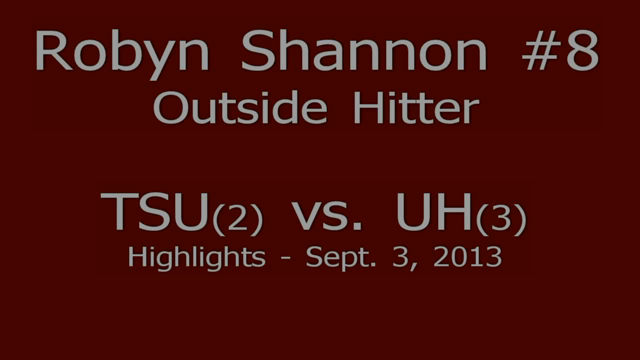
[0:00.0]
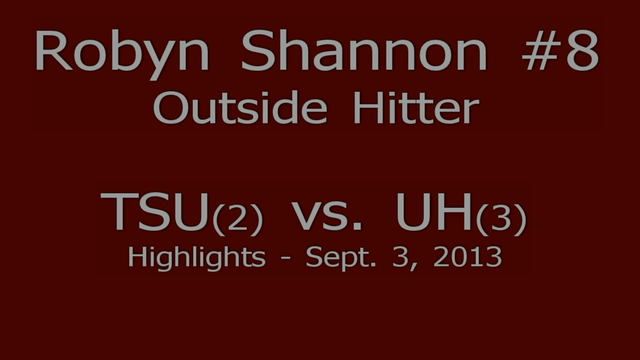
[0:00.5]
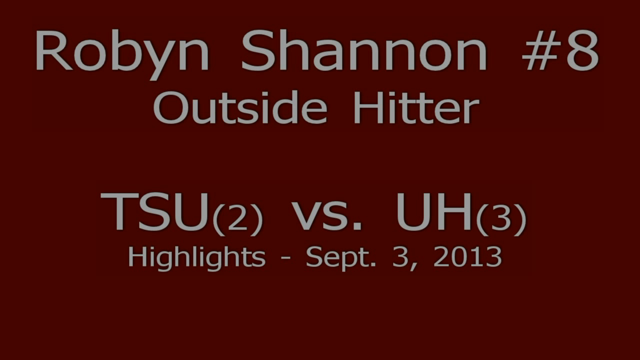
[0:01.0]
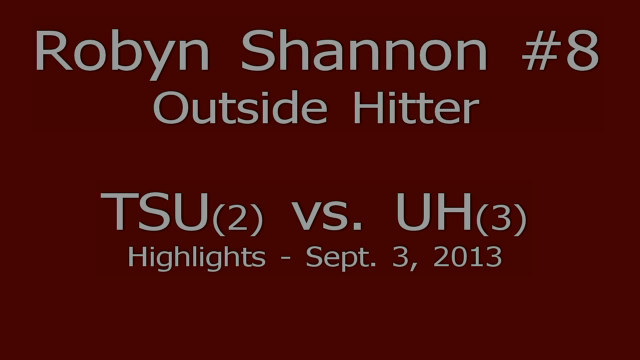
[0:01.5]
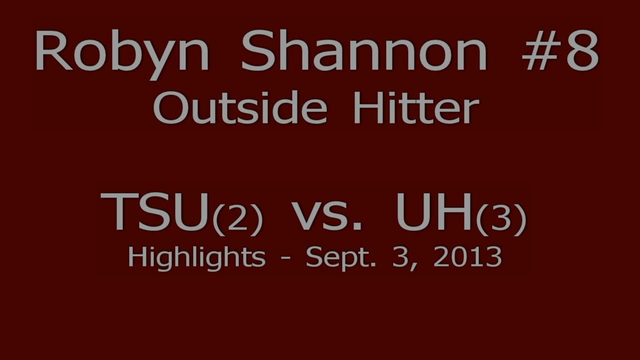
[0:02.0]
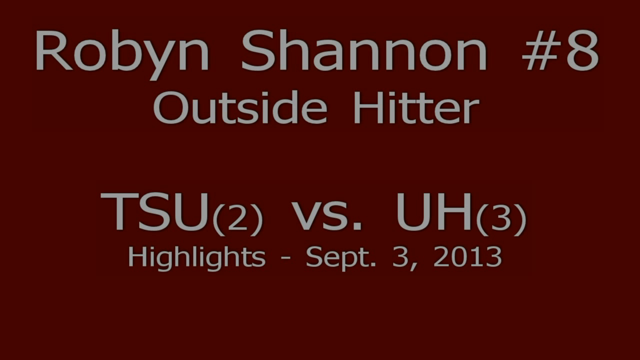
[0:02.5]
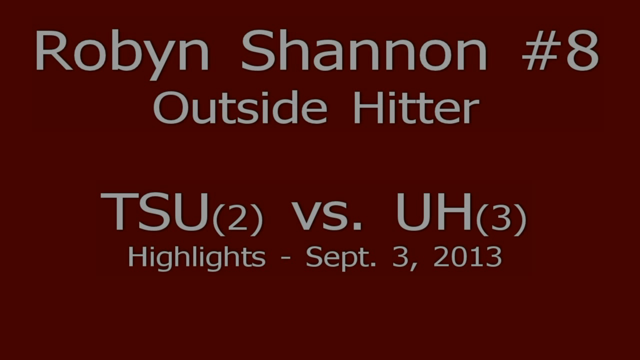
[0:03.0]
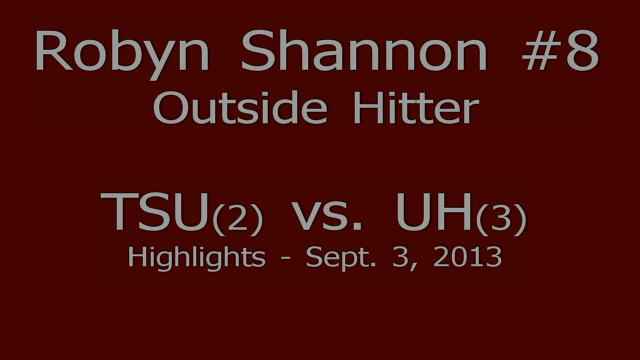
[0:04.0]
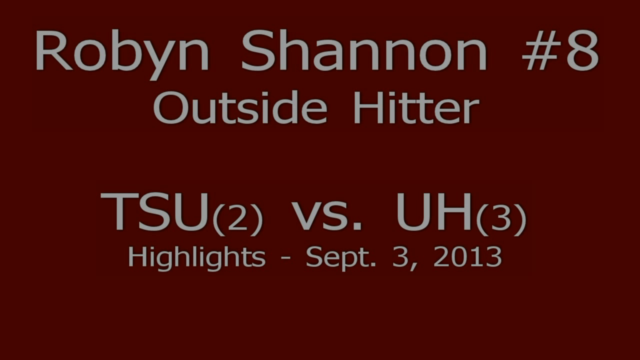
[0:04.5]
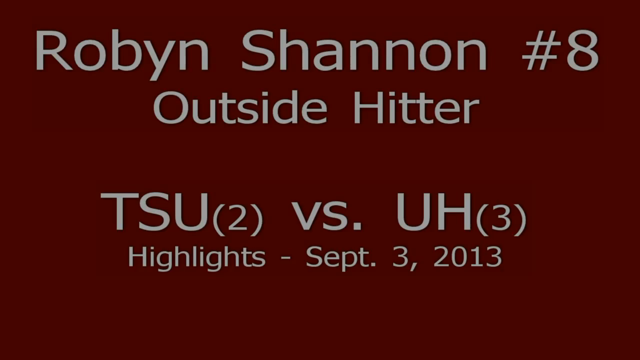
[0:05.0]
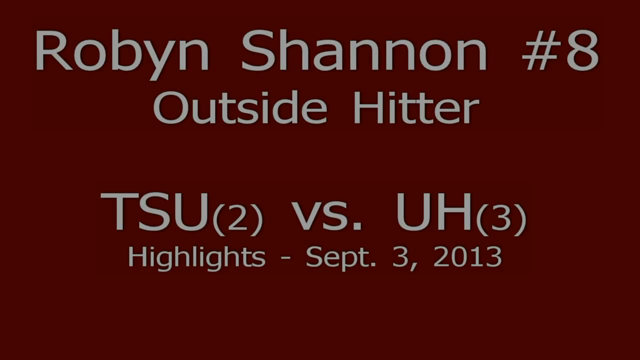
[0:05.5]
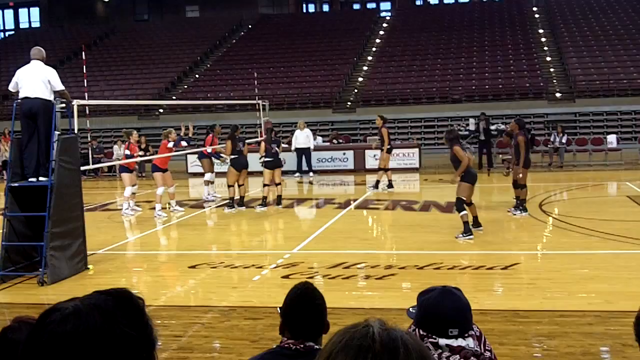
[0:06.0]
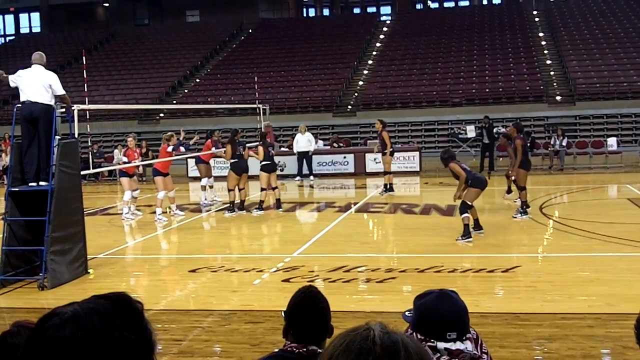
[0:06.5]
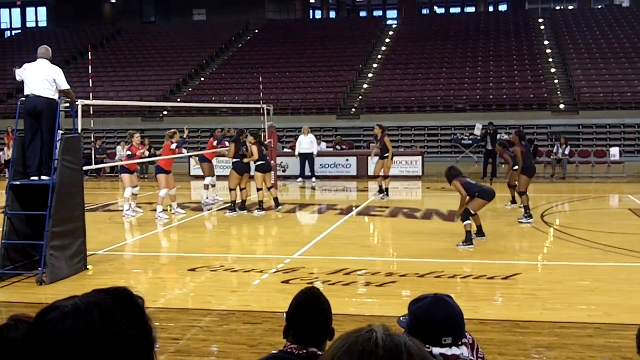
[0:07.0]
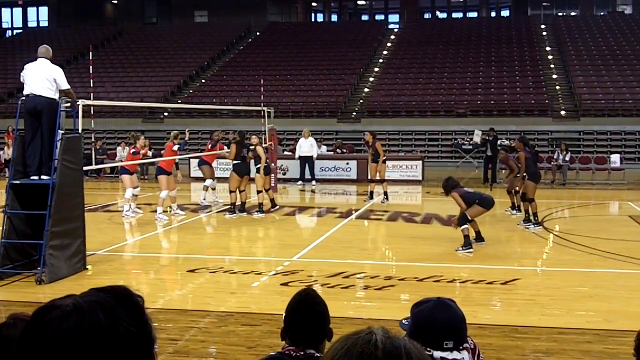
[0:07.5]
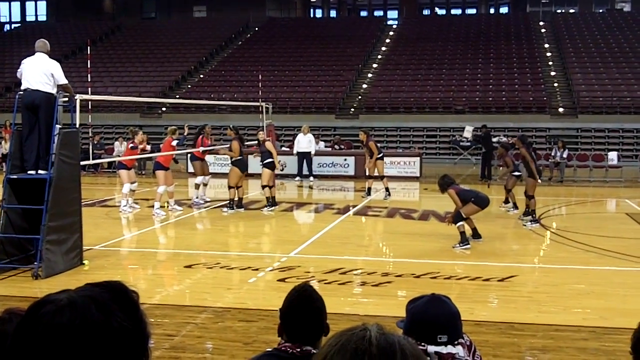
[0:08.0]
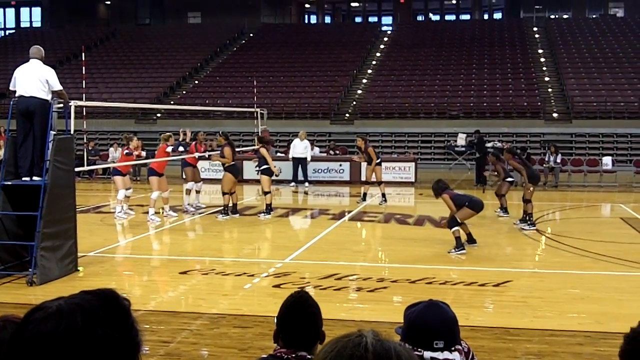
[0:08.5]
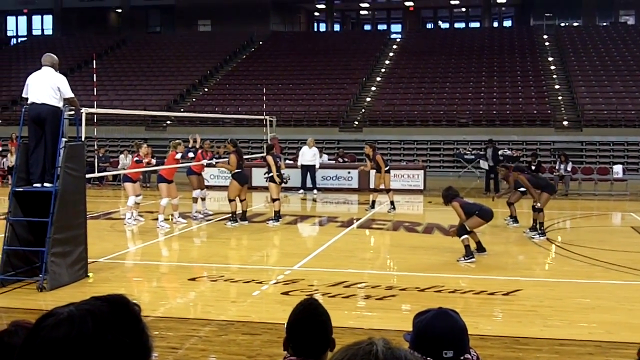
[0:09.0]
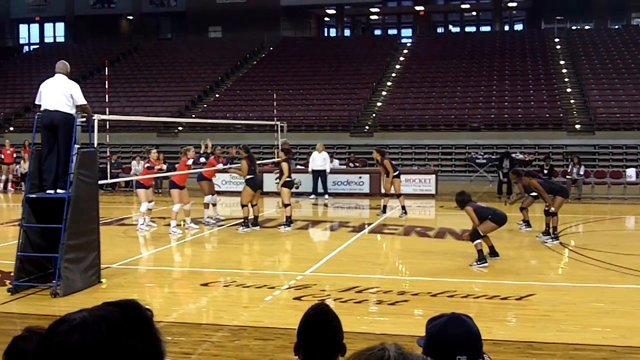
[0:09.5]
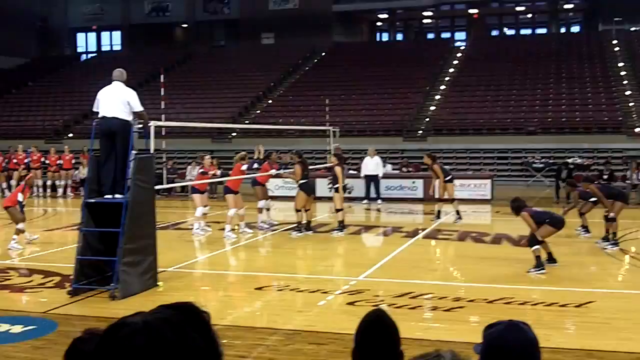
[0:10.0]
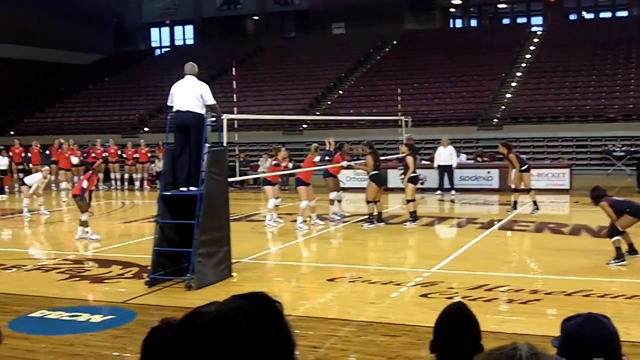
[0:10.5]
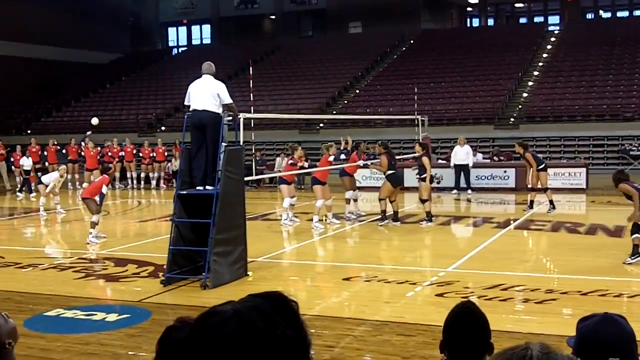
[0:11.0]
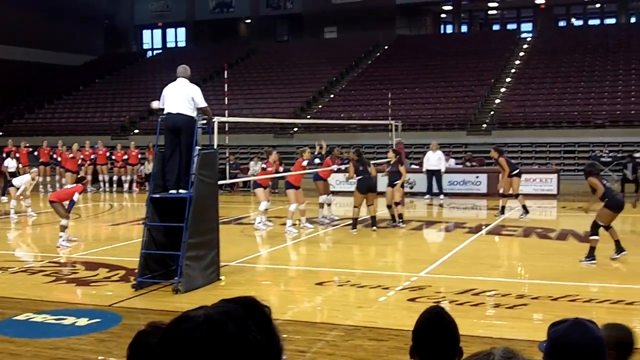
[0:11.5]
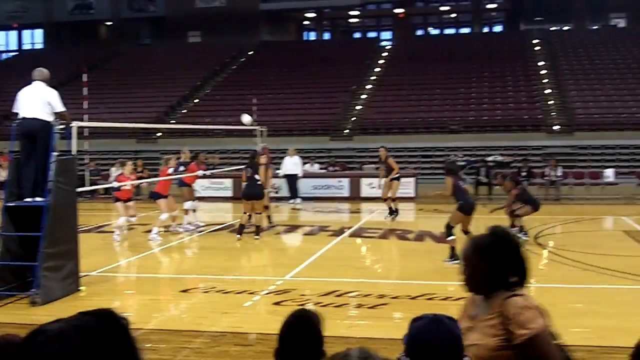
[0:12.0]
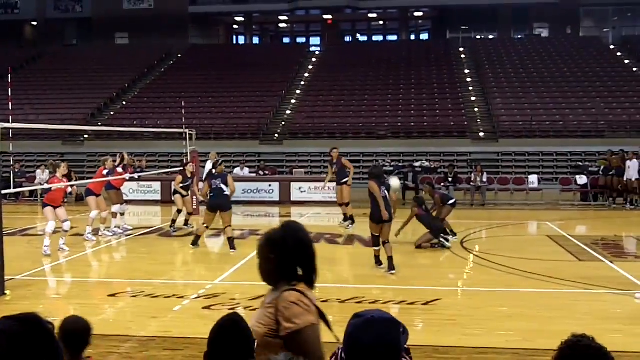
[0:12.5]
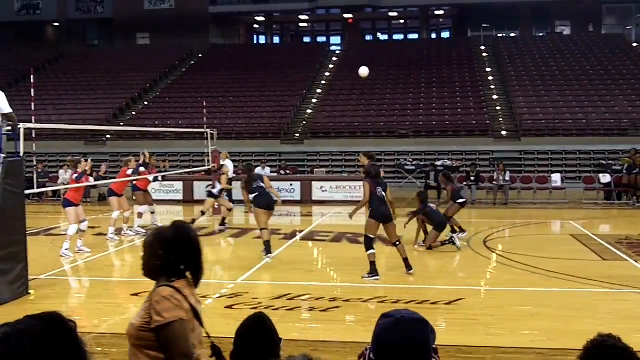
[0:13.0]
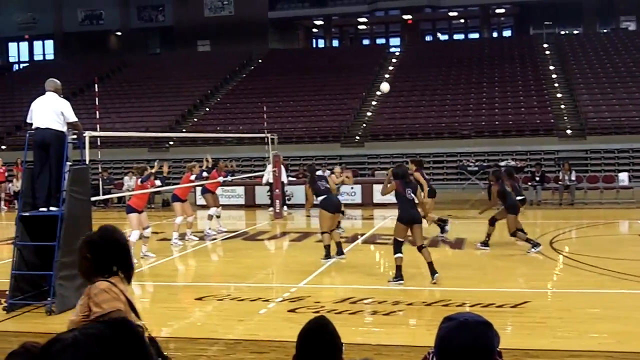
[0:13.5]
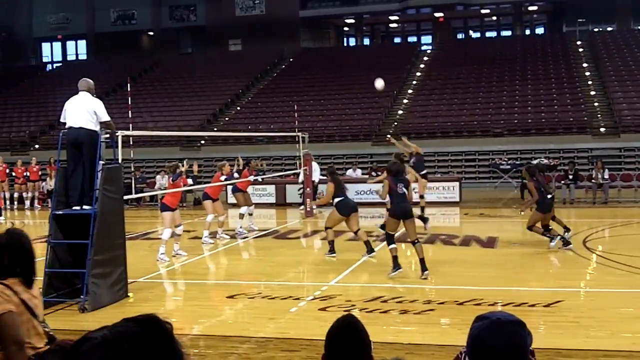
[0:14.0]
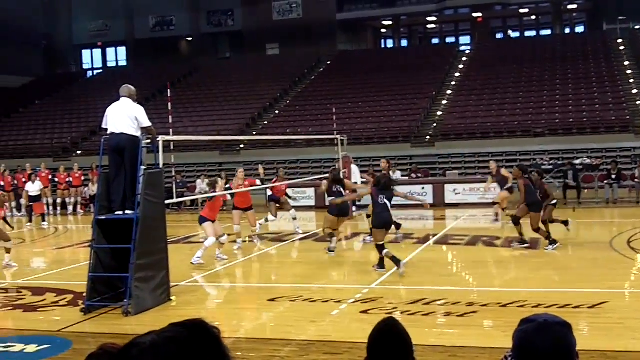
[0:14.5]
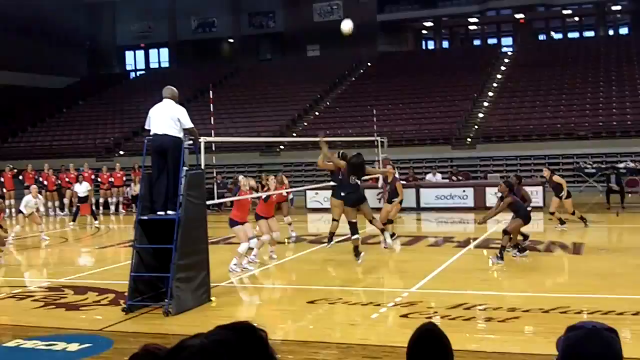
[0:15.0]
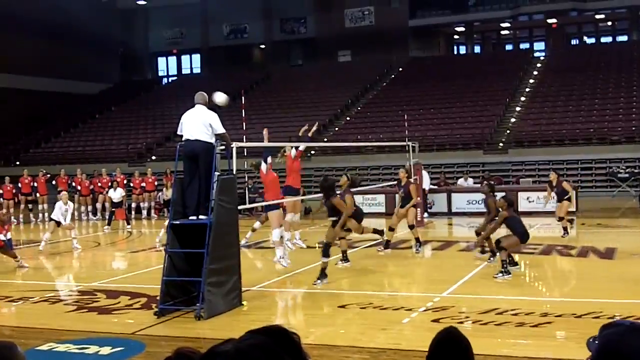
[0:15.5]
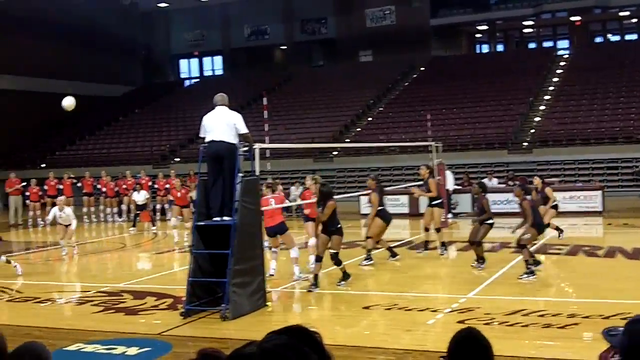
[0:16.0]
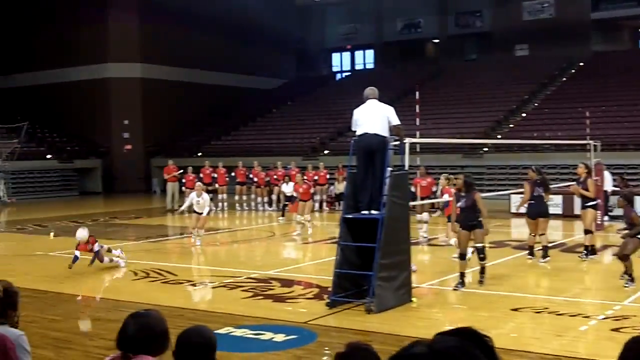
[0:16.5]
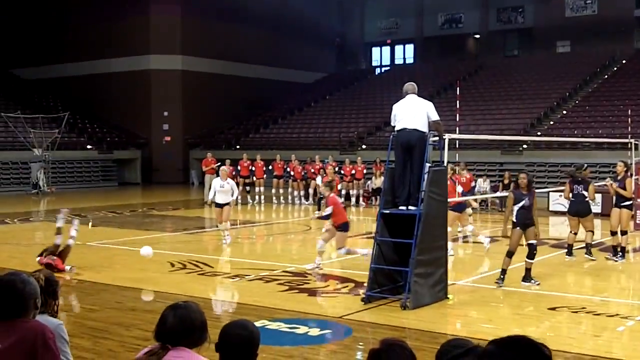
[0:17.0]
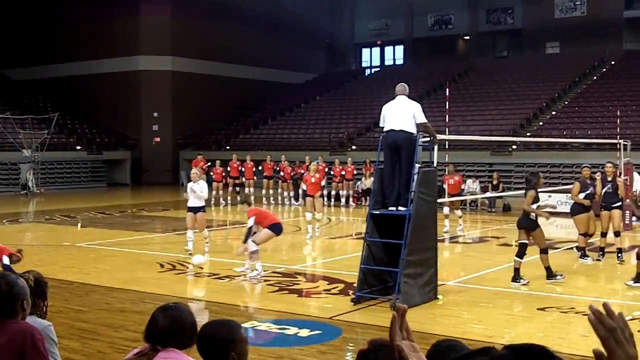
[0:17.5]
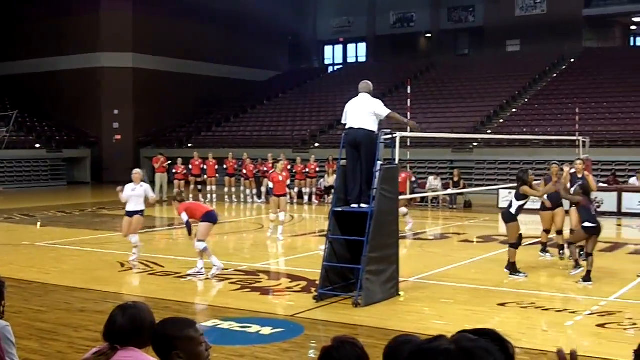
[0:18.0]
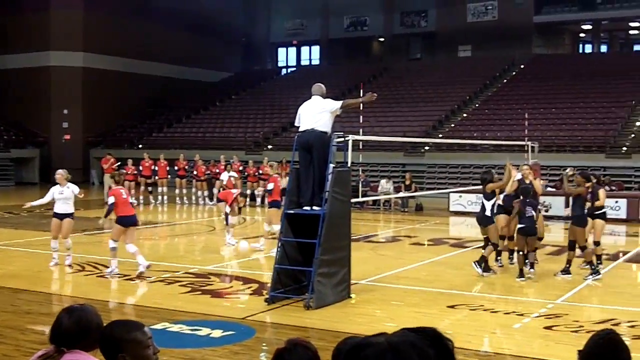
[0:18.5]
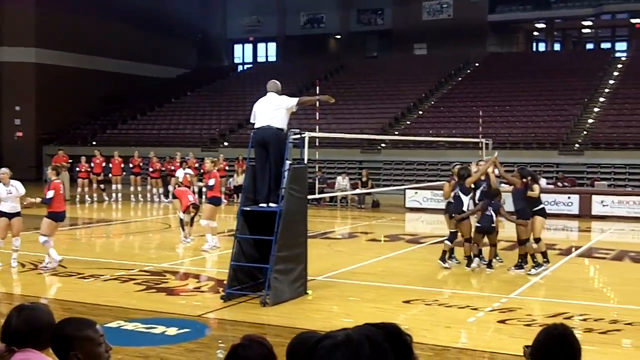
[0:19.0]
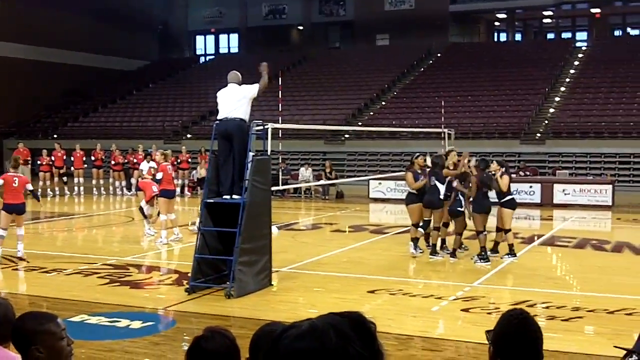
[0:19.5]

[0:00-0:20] A sign reads "Robin Shannon number eight outside hitter," TSU versus another team. It is a volleyball game between a red team and a team in black jerseys, apparently a college game, played in an empty stadium. The word "highlights" appears, and the game is dated September 3rd 2013, TSU versus UH. It is a girls' team, and there are quite a few players on the teams; those not playing watch from the sideline. The red team hits the ball, the black team returns it, and the black team scores because the red-jerseyed player who was supposed to hit it misses and falls to the floor. Only one play is shown before the video goes back to the billboard reading "Robin Shannon number eight." During the game, the referee, in a white shirt, stands on some steps that lead up to a little platform.